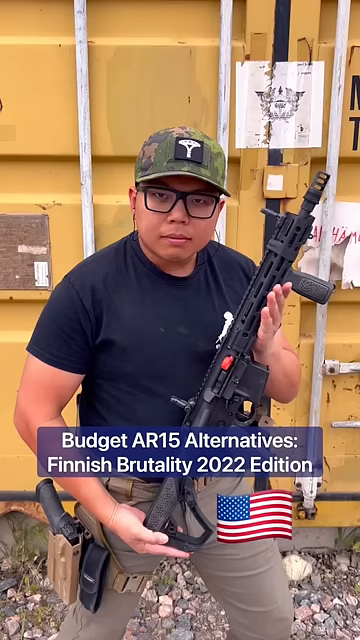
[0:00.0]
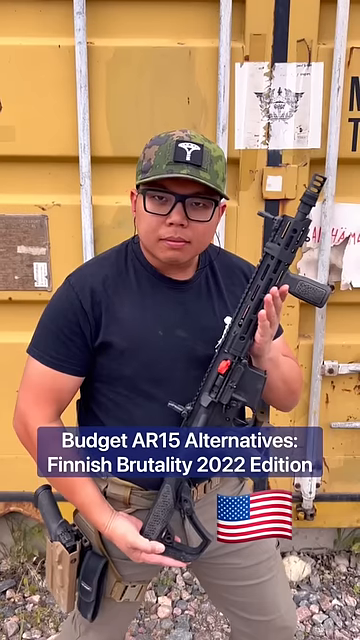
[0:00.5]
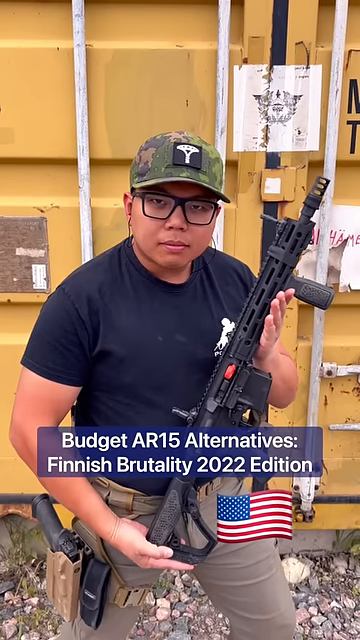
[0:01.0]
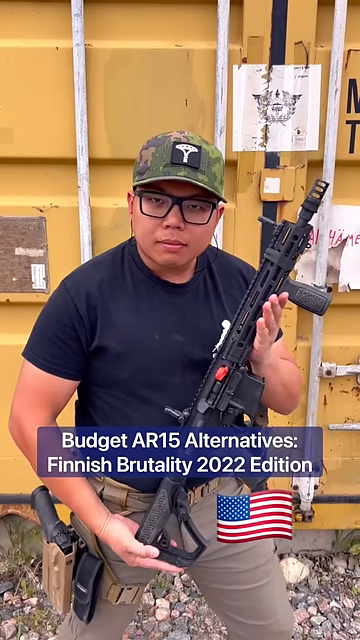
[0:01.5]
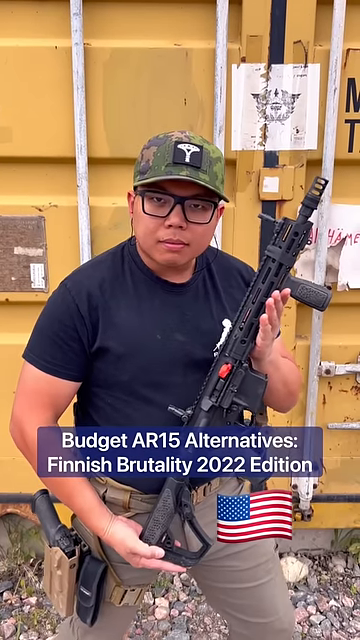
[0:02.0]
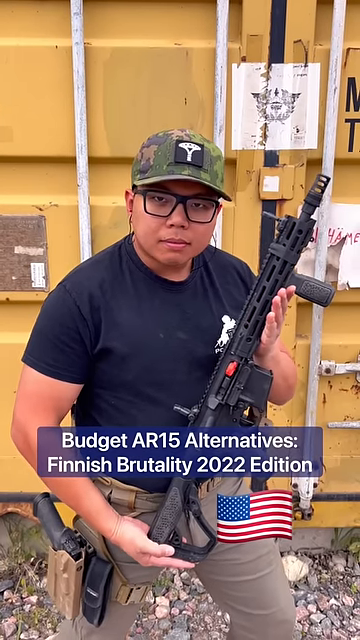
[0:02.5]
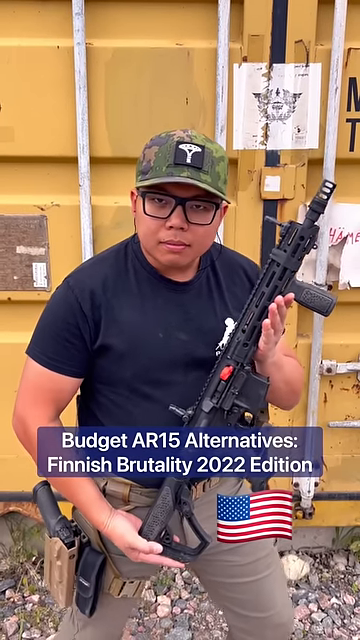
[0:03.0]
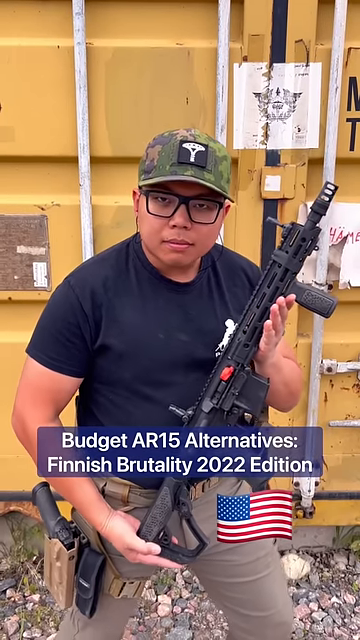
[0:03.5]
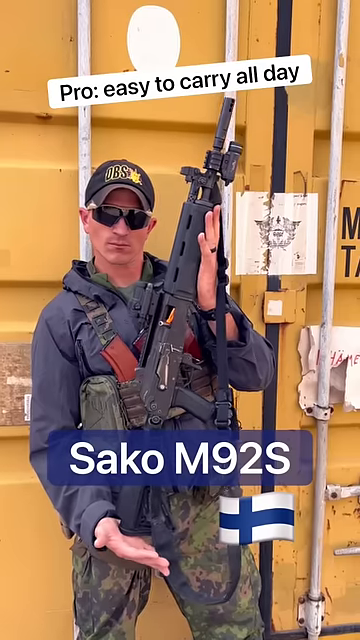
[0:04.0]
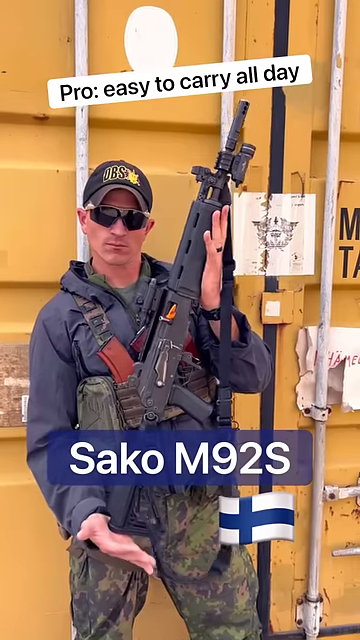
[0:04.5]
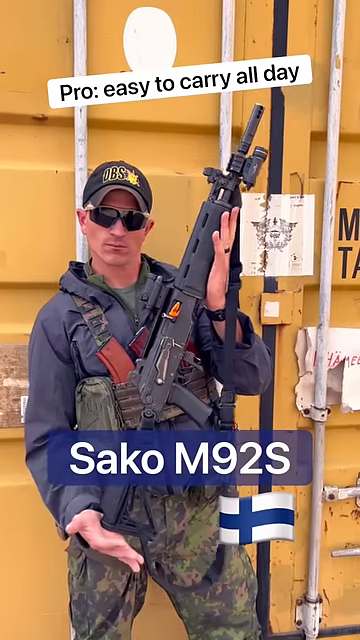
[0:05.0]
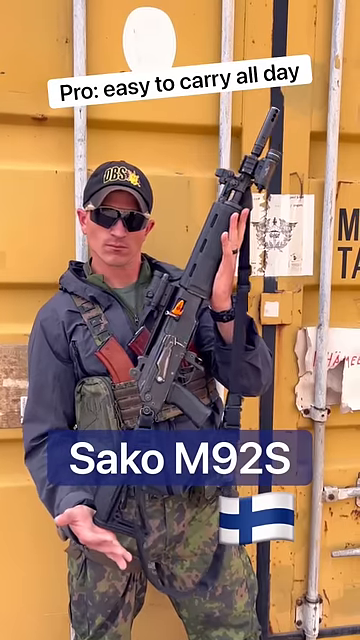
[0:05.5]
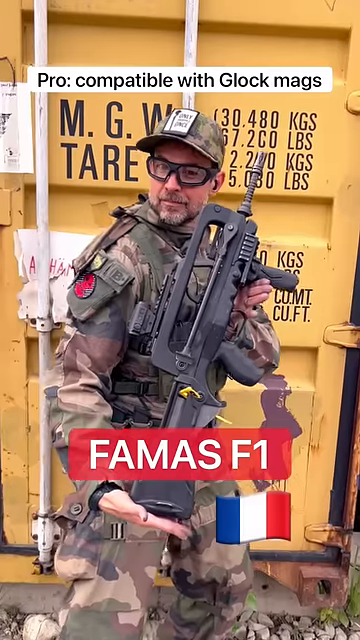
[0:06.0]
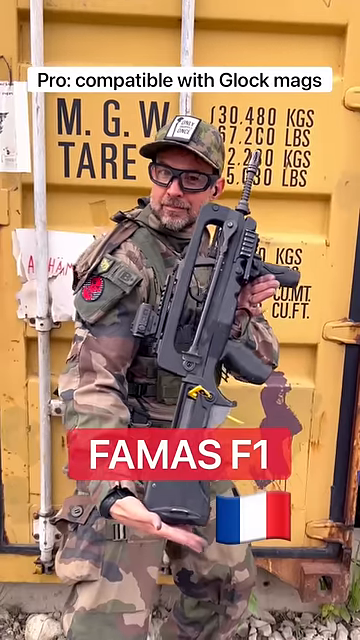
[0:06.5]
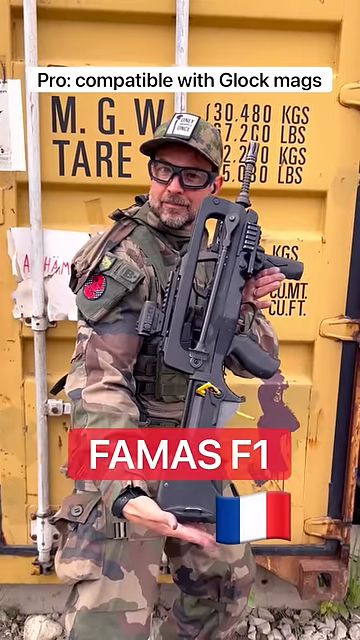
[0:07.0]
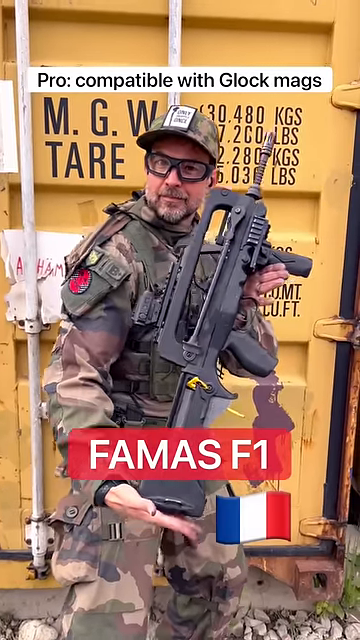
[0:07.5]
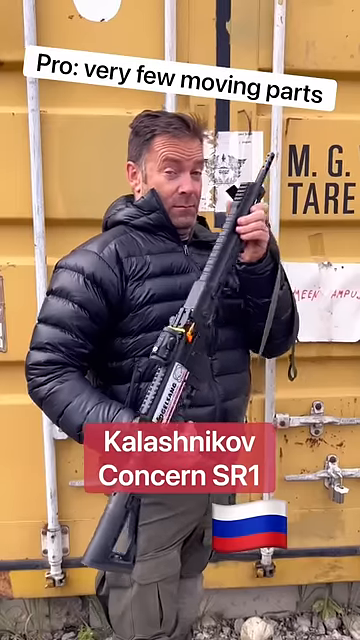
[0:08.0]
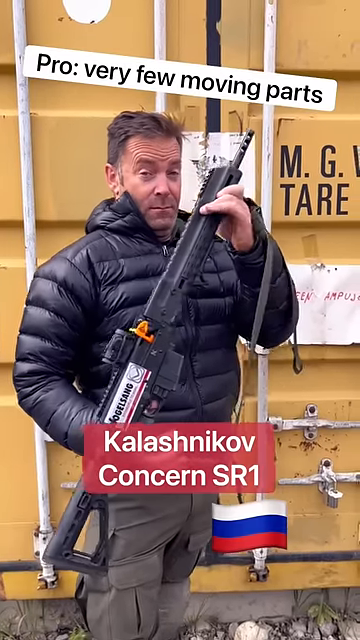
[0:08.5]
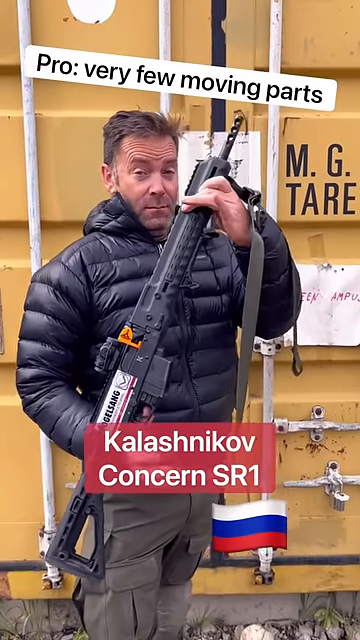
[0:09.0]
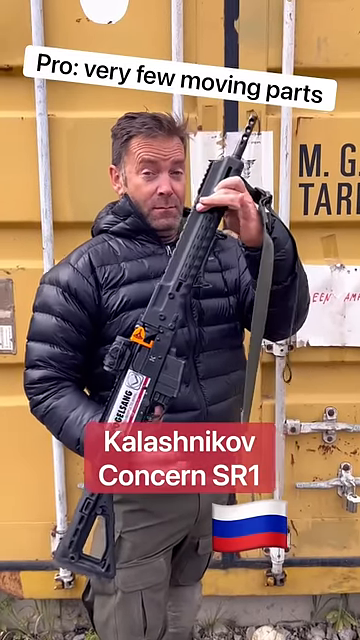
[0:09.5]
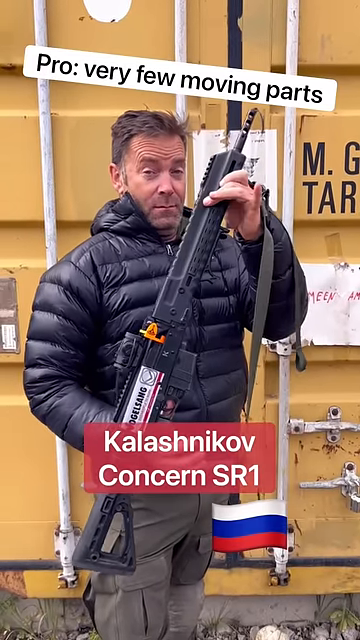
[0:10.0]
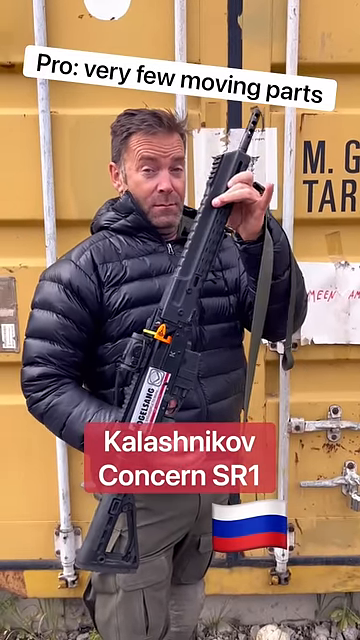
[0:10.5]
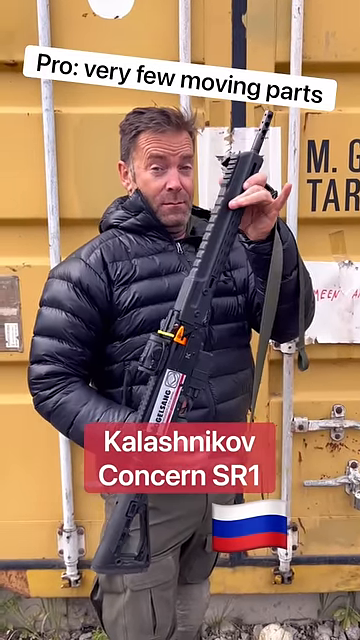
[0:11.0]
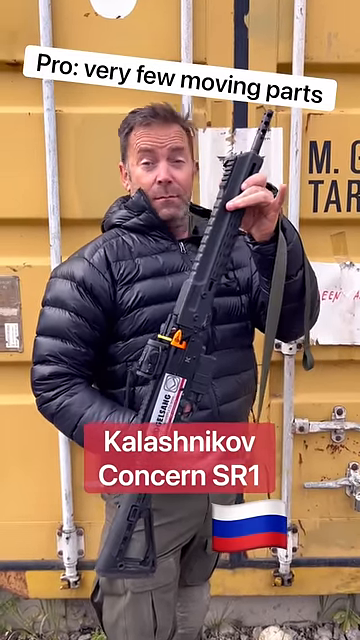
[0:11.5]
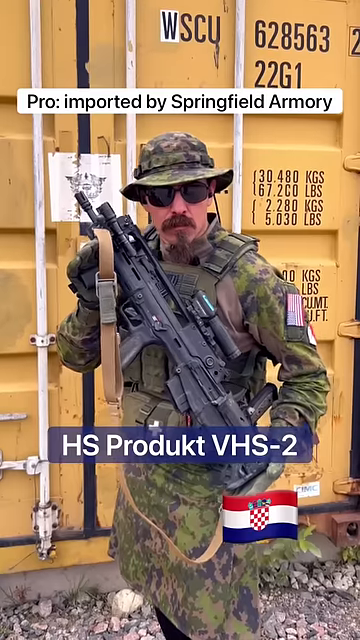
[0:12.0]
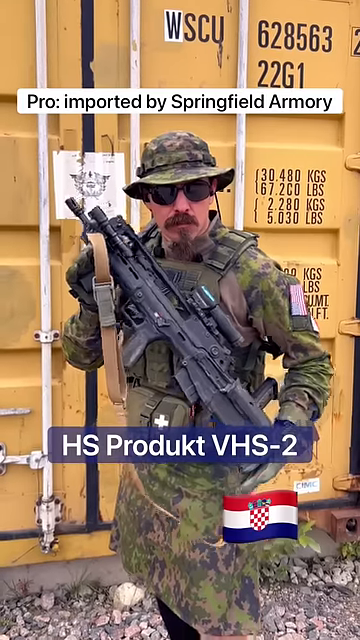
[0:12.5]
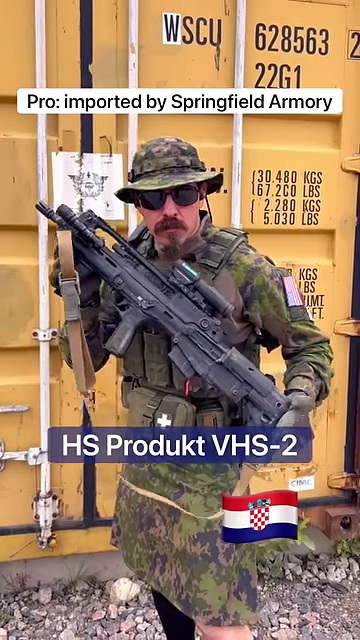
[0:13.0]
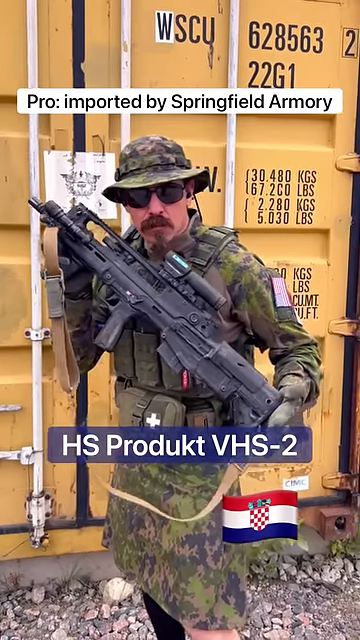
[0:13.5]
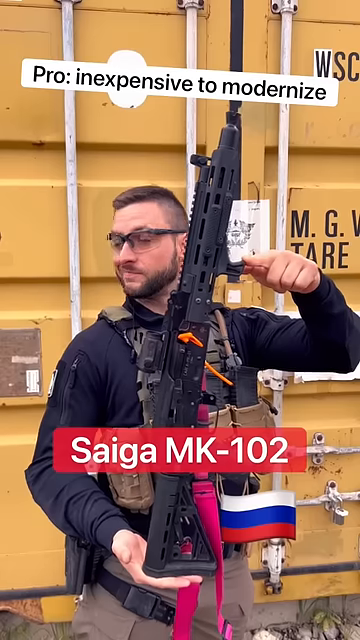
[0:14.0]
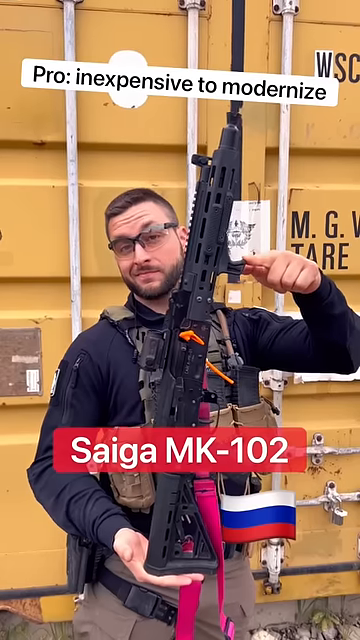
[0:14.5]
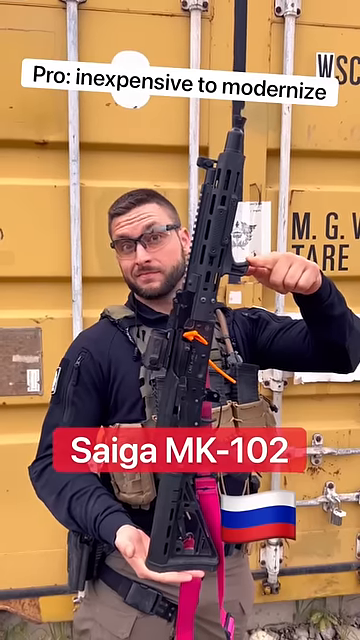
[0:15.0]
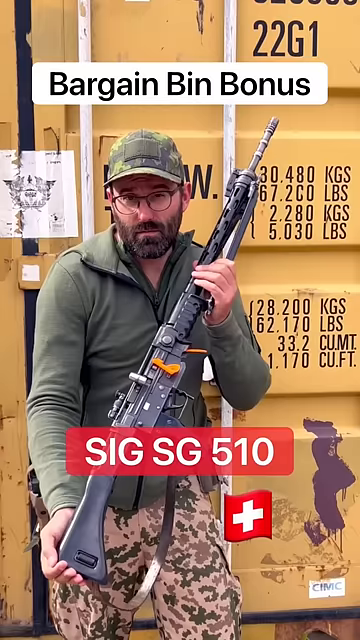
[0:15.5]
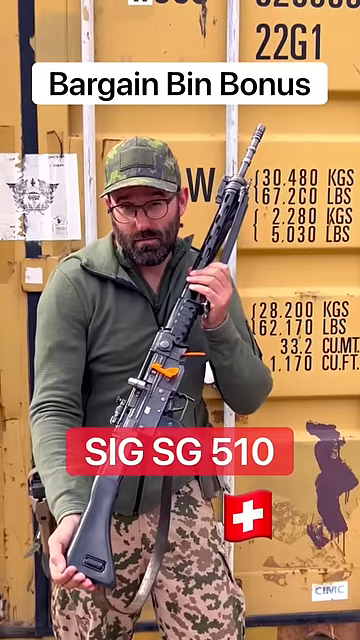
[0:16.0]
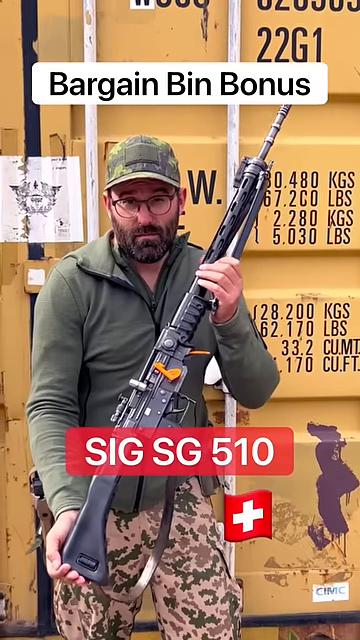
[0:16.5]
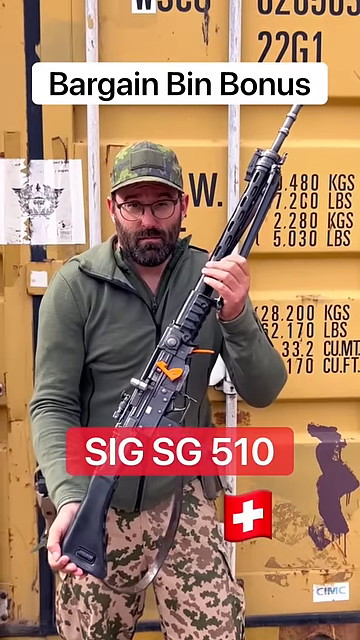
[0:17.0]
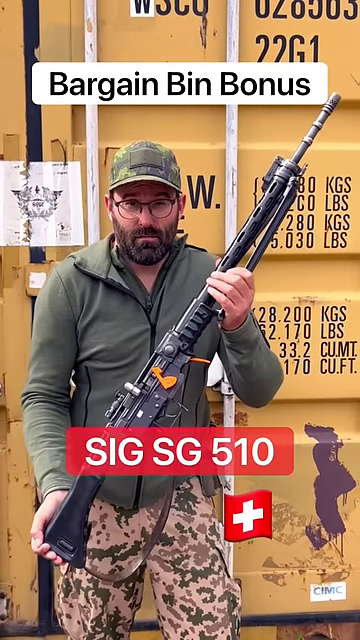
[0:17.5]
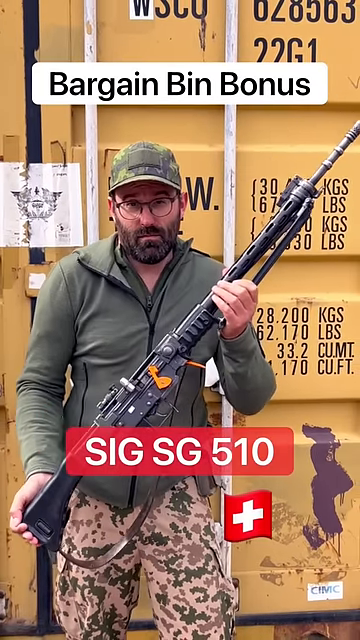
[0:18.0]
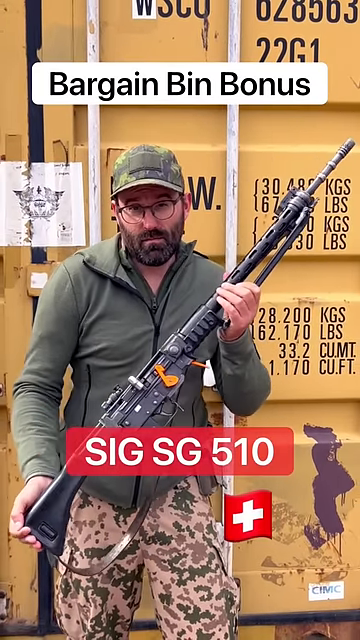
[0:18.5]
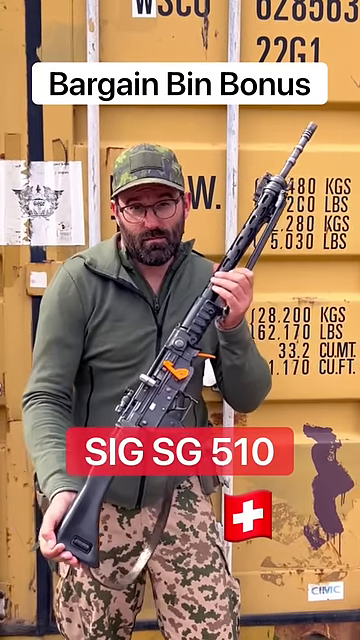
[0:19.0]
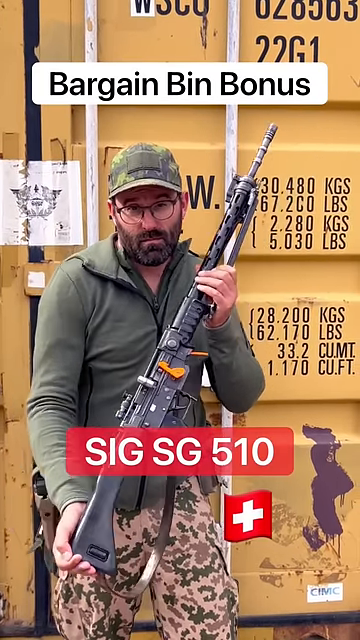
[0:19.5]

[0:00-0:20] Apparently seven people appear, all men. The guns shown are presented as alternatives to the American AR-15 assault rifle, all allegedly budget friendly and all from countries other than the United States; there are seven different countries, possibly including Sweden or Switzerland and France. Everyone is filming from the same location, where all of the guns are. The video displays the name of each gun and the country where it is made.